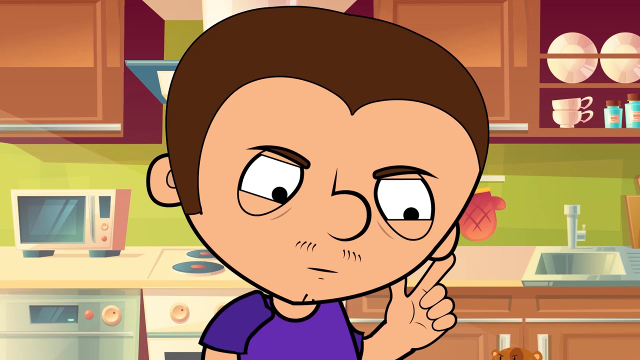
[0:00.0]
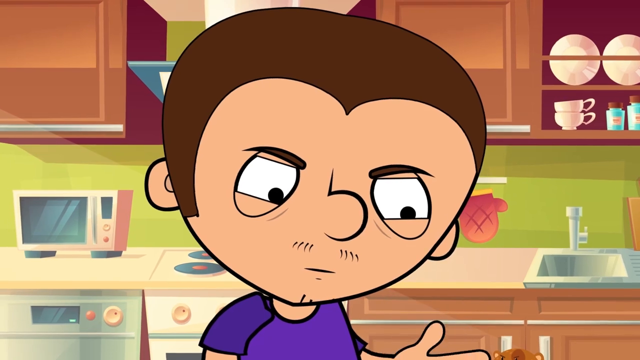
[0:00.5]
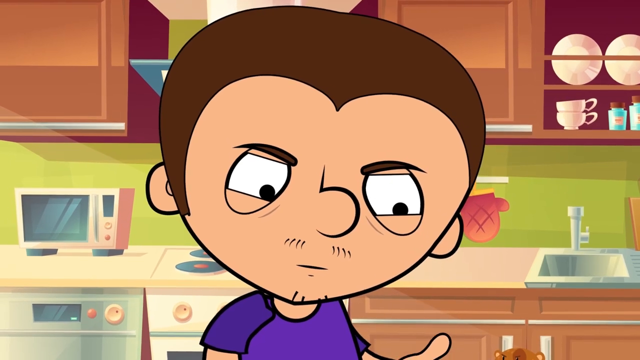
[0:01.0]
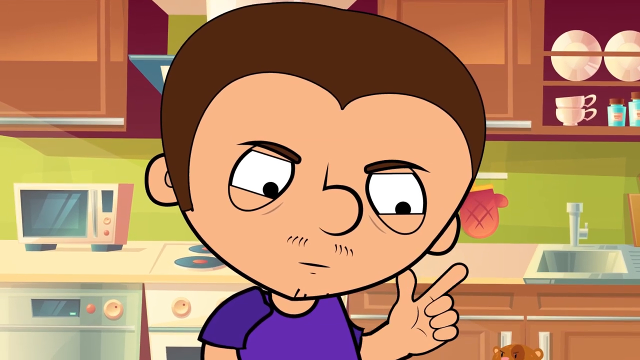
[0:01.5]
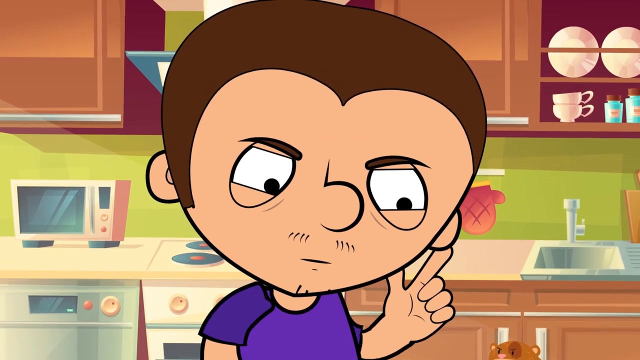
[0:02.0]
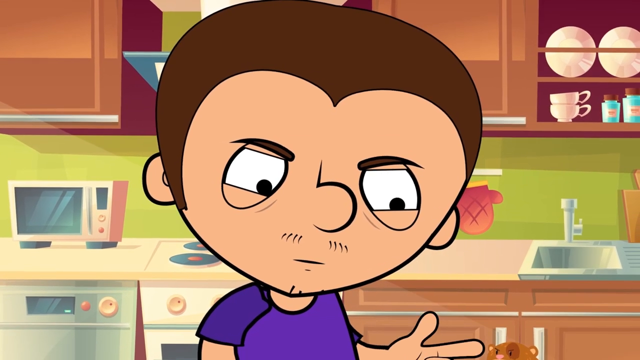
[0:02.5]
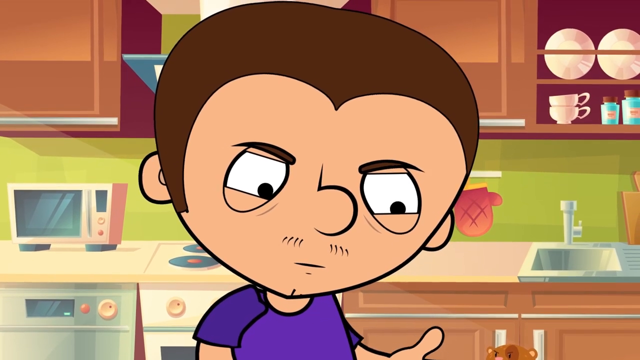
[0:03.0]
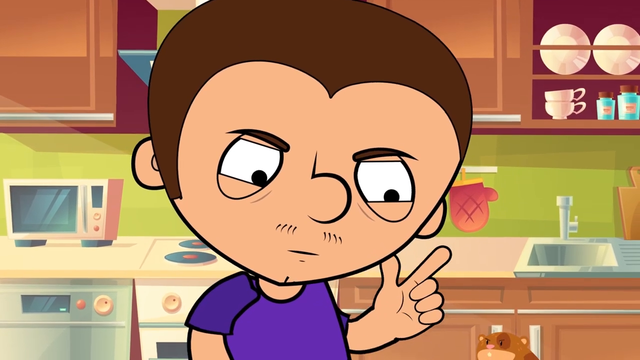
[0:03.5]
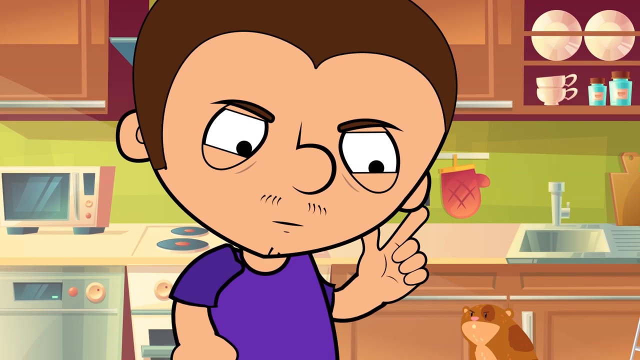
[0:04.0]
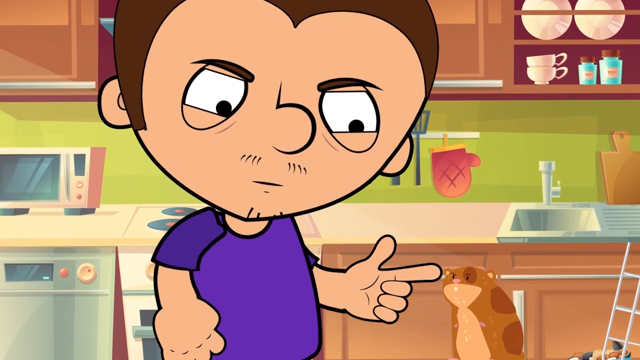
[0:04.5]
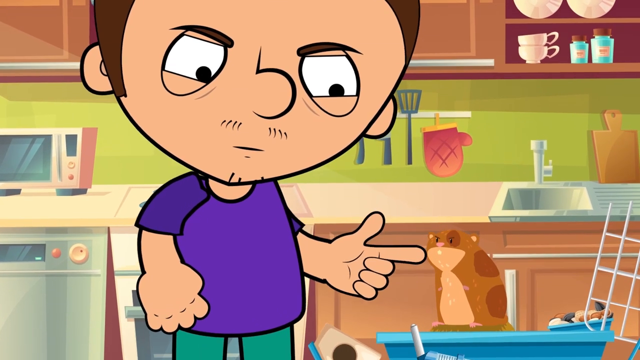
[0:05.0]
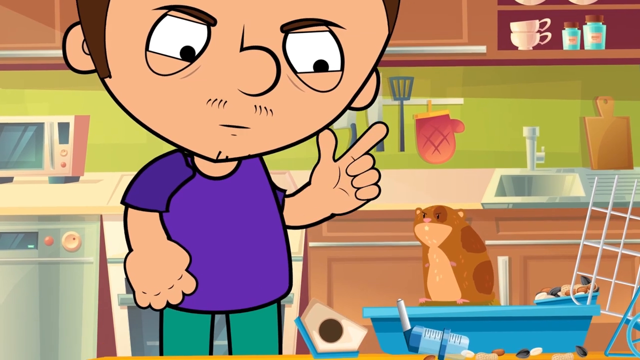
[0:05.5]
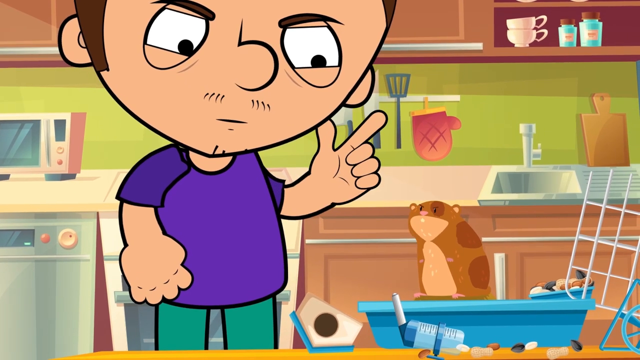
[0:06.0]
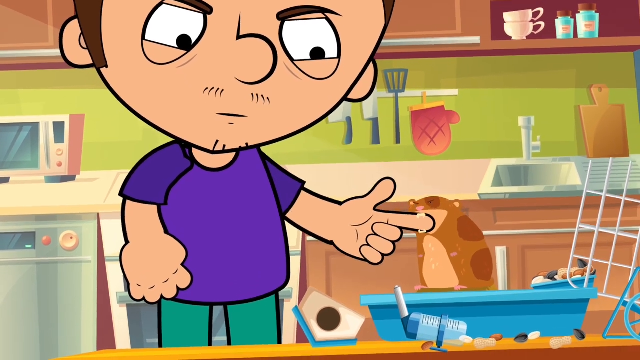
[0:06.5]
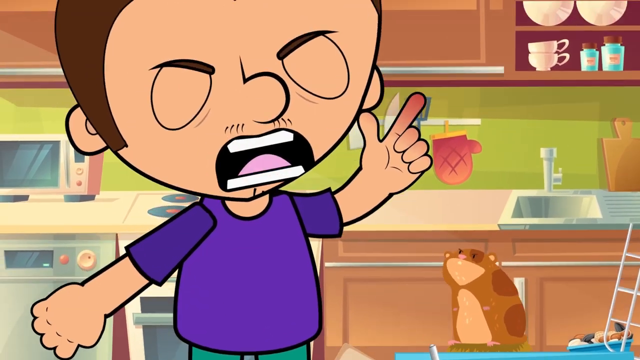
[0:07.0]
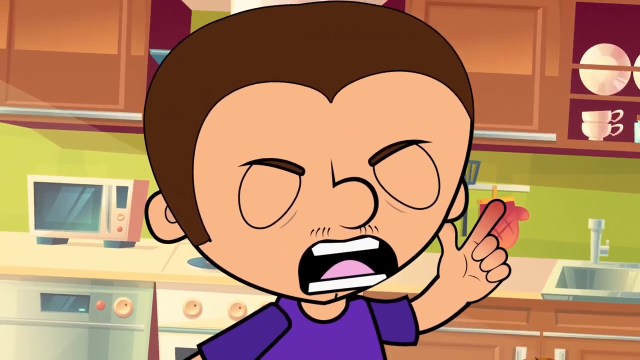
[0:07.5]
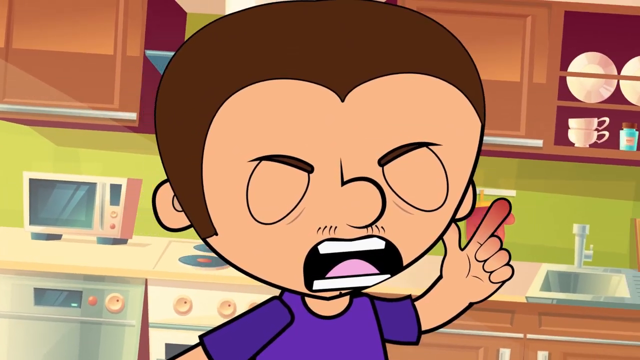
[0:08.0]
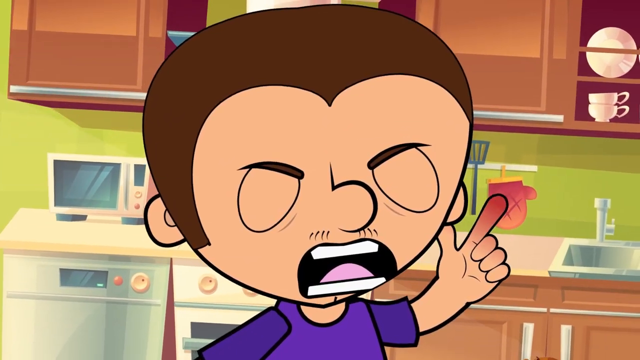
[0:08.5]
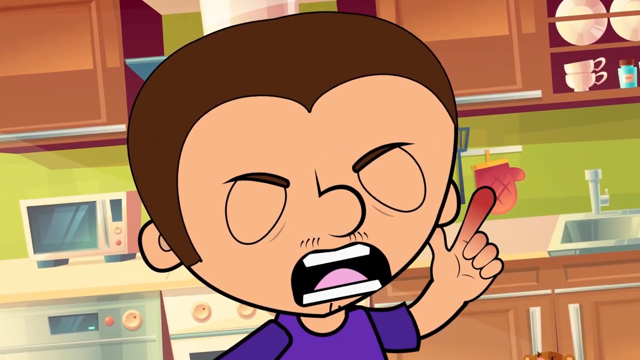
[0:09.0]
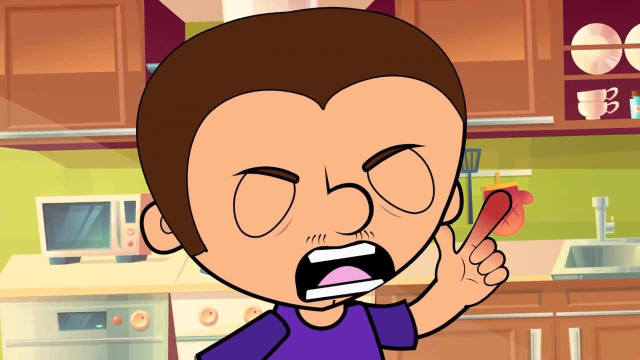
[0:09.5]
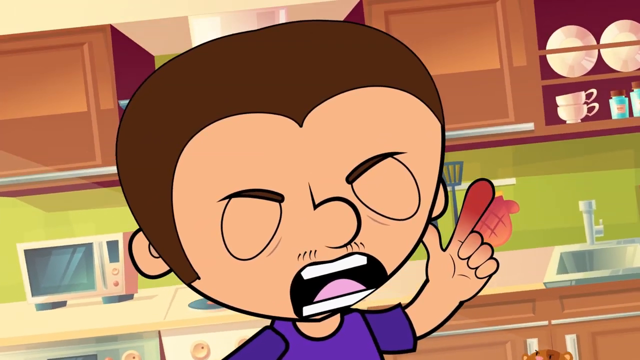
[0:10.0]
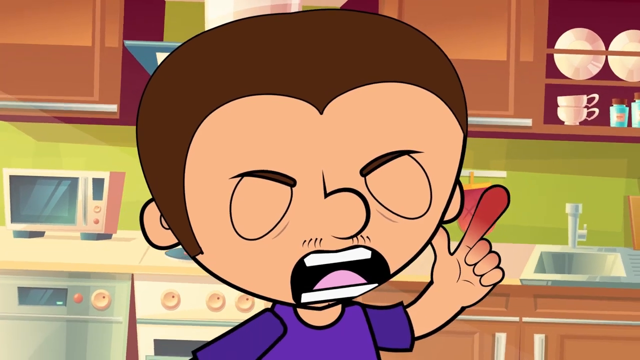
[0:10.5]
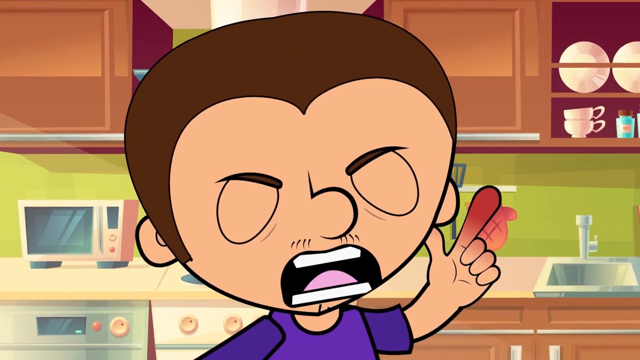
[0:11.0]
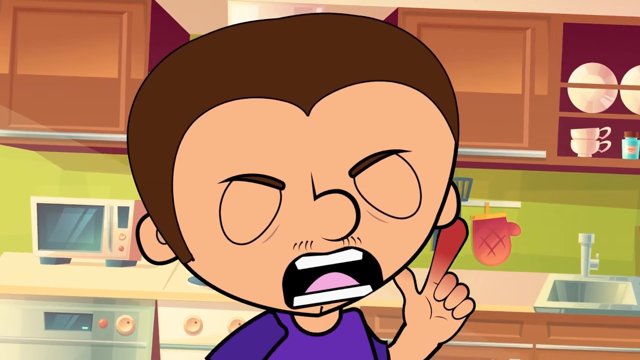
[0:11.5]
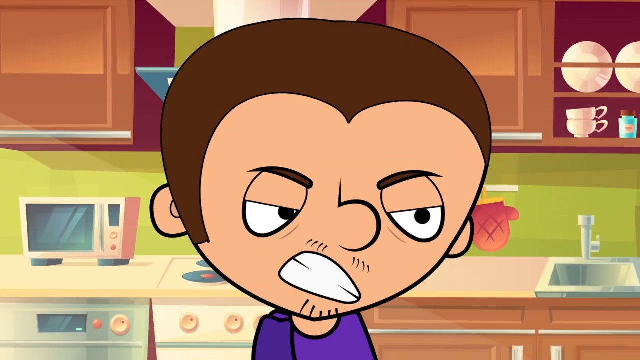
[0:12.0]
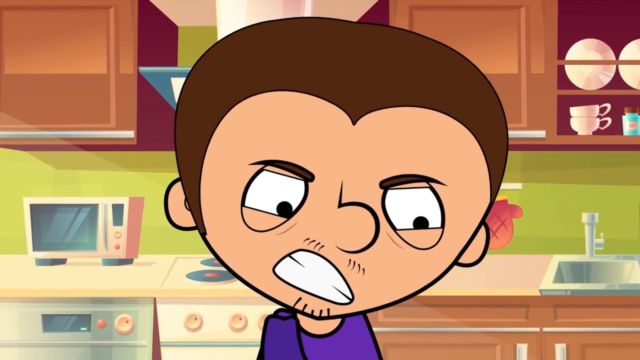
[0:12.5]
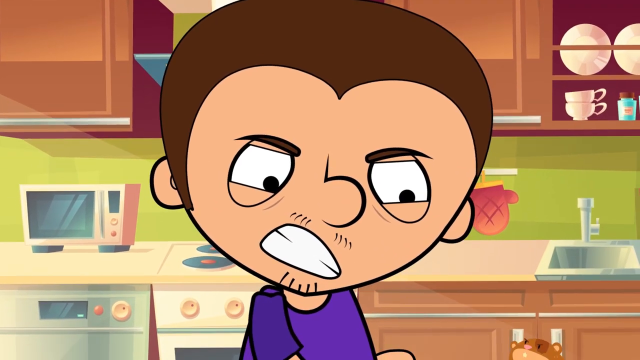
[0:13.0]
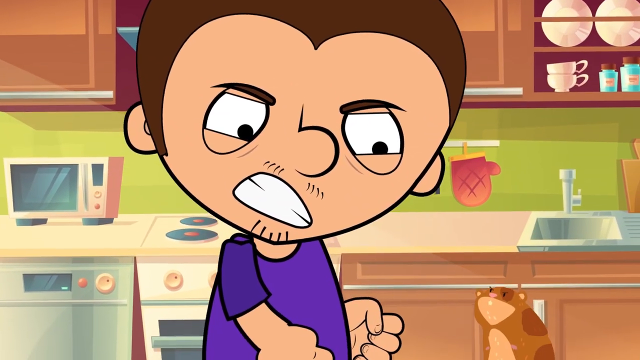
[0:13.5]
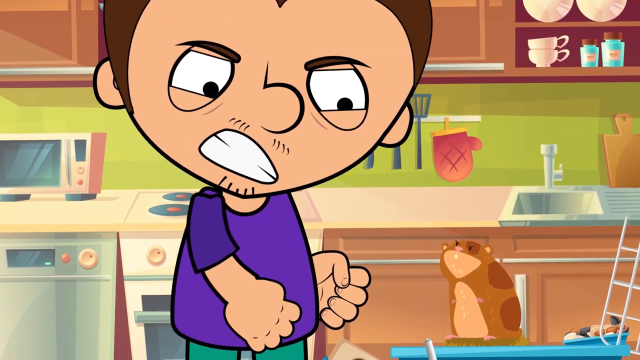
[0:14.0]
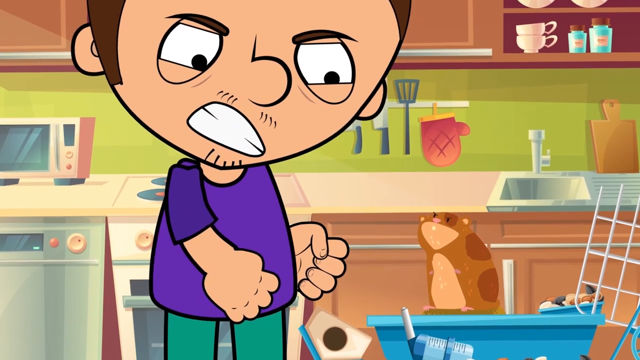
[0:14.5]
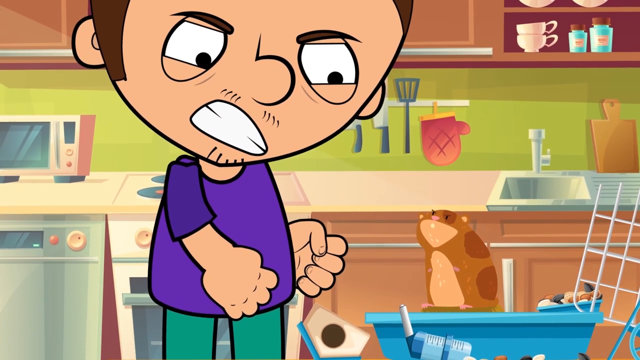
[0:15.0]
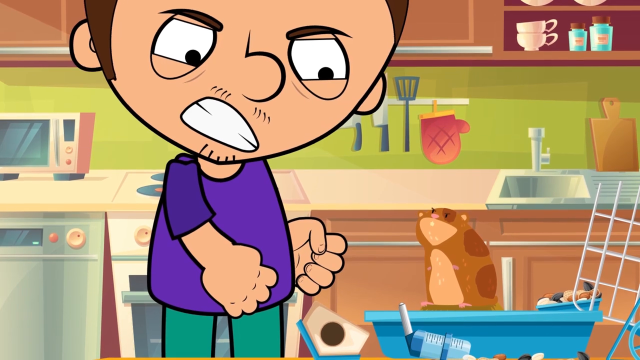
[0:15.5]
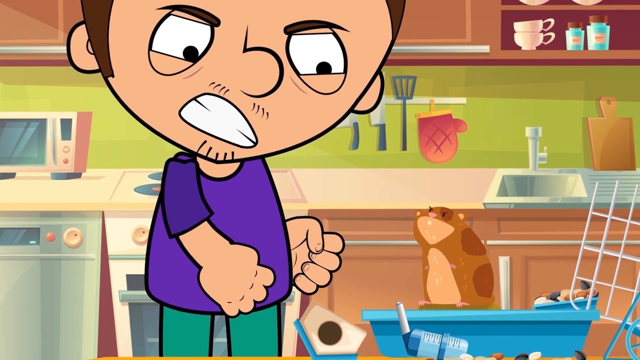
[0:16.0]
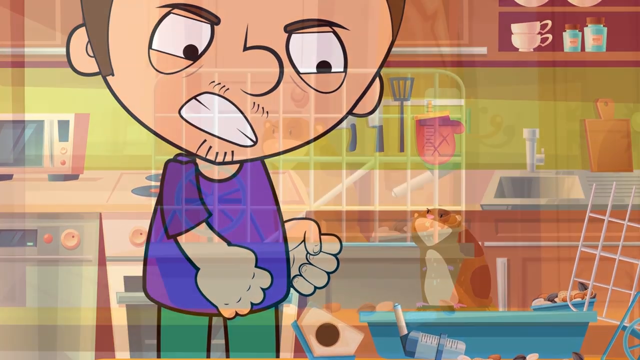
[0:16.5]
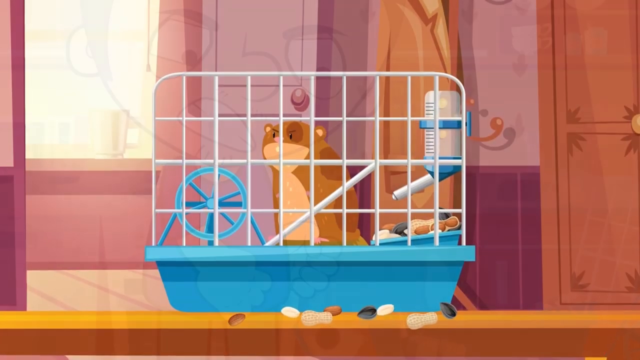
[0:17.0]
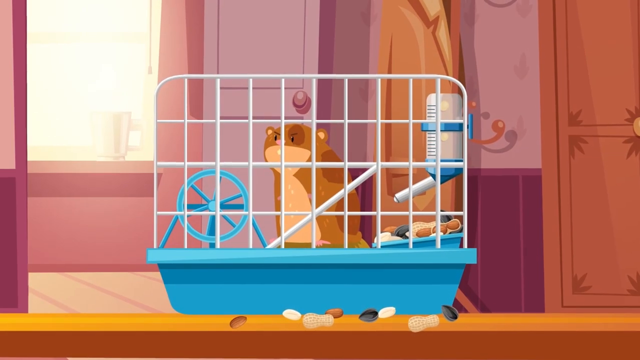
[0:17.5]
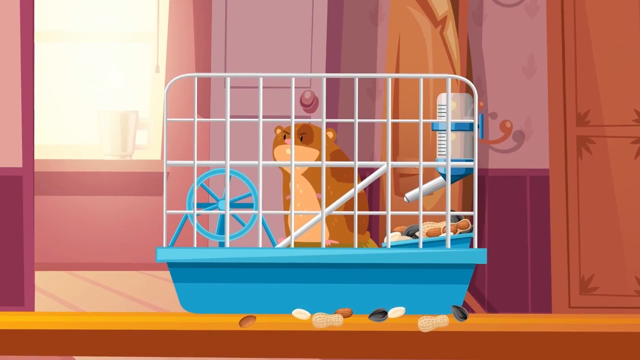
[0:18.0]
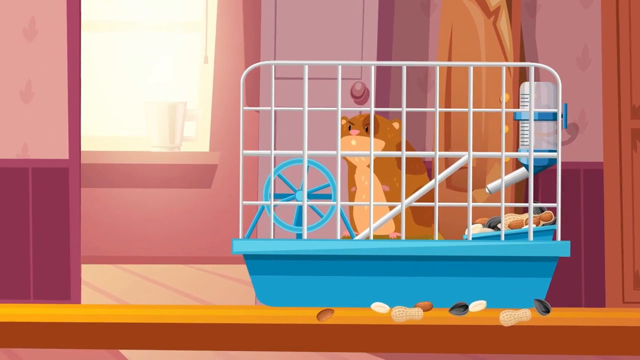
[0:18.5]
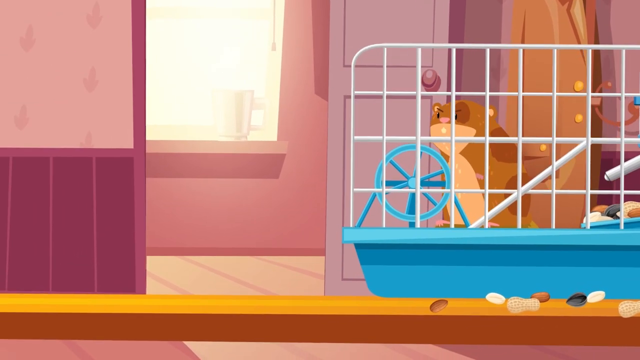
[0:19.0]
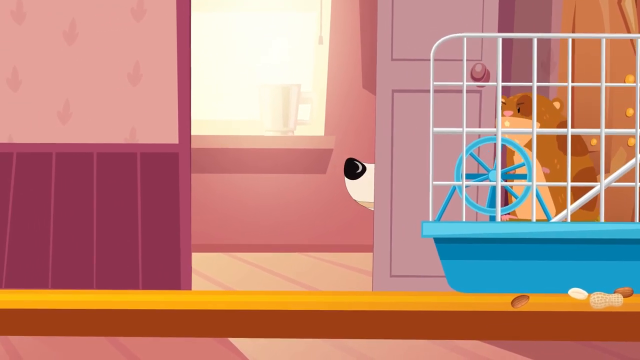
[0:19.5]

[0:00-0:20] A male character in a blue shirt has a disappointed look on his face. He has light skin, short brown hair, a slight mustache and somewhat furrowed eyebrows. He shakes his finger up and down, points, and turns his head as if to say no, directing these motions at a hamster on the countertop. At one point he puts his finger too close to the hamster and it bites him on the finger. His finger is shown red and throbbing as he hollers in pain and appears to scream. He becomes very angry: he bares his teeth, is visibly upset, balls up his fists and shakes his head no at the hamster.